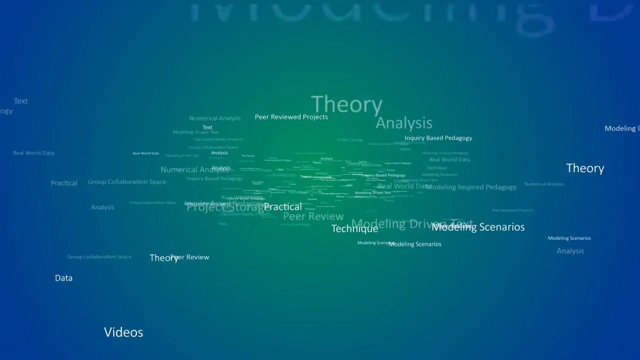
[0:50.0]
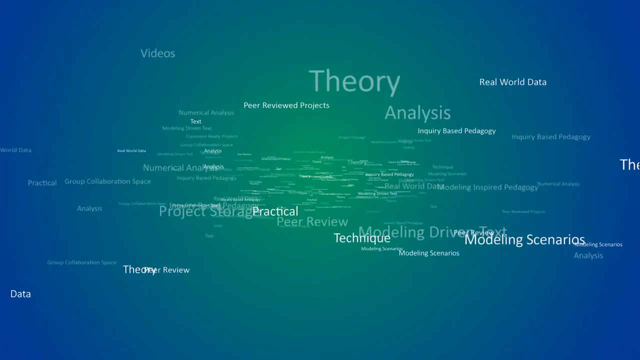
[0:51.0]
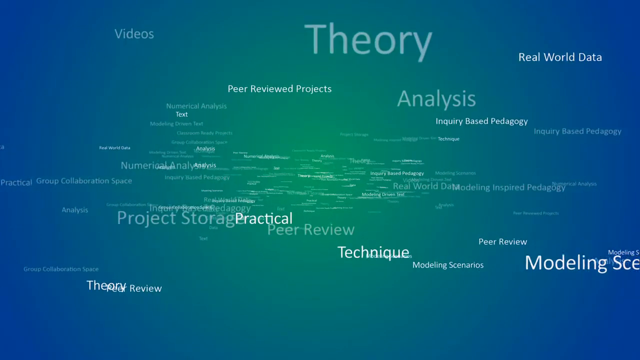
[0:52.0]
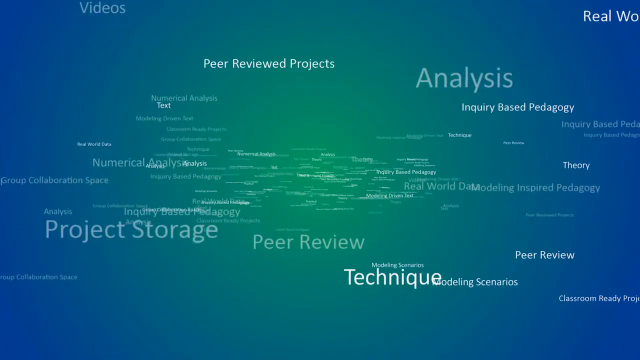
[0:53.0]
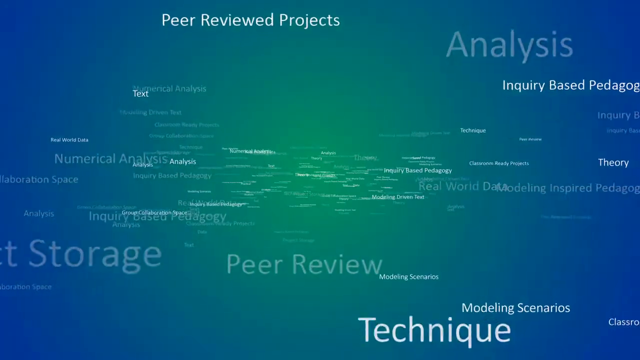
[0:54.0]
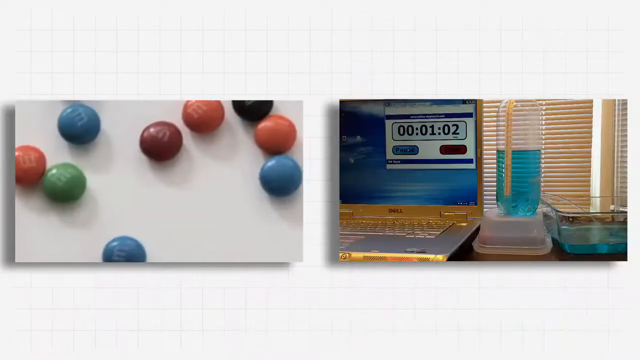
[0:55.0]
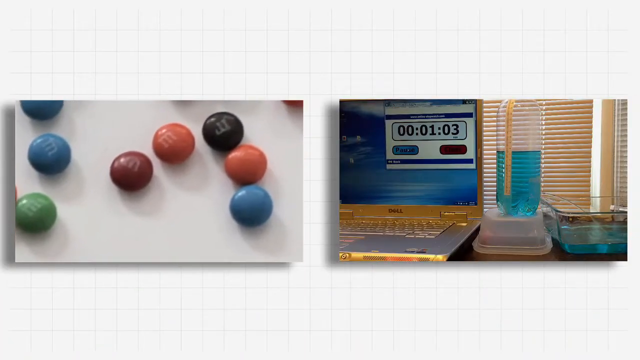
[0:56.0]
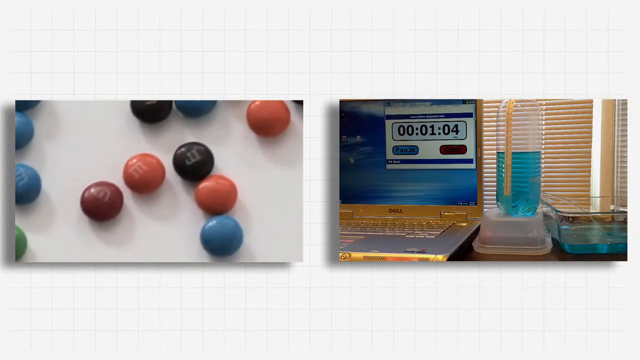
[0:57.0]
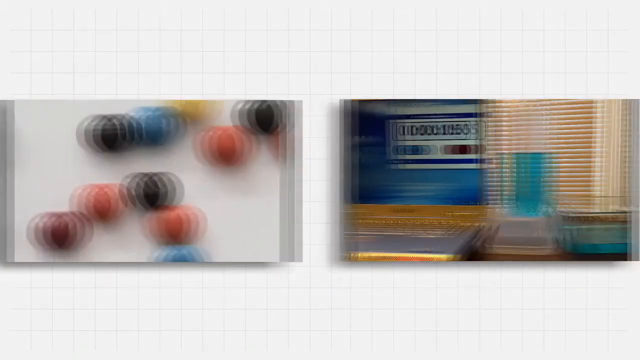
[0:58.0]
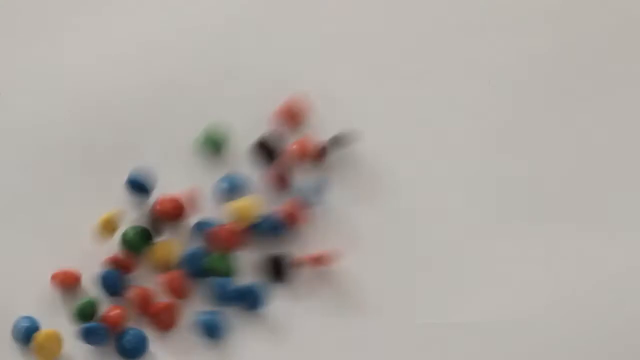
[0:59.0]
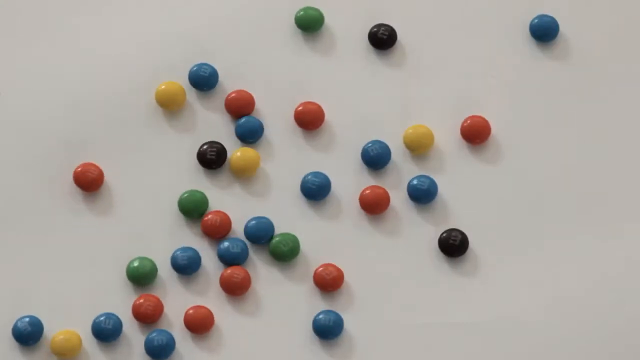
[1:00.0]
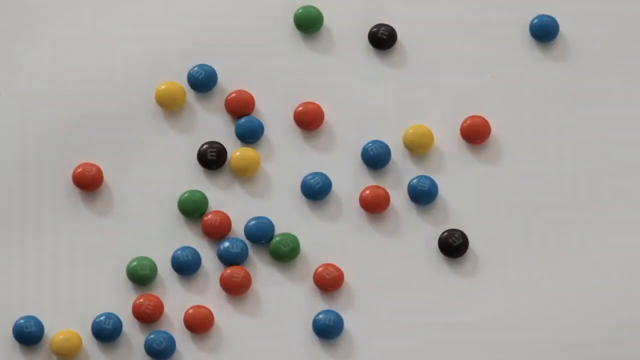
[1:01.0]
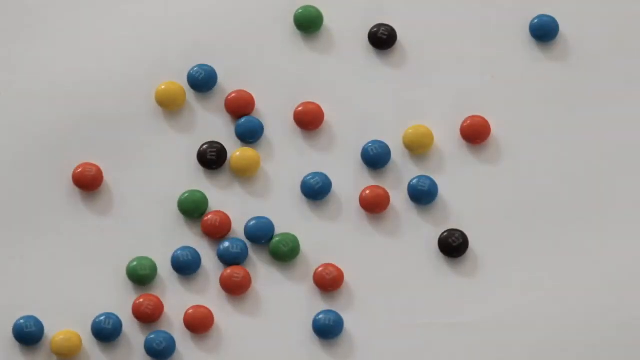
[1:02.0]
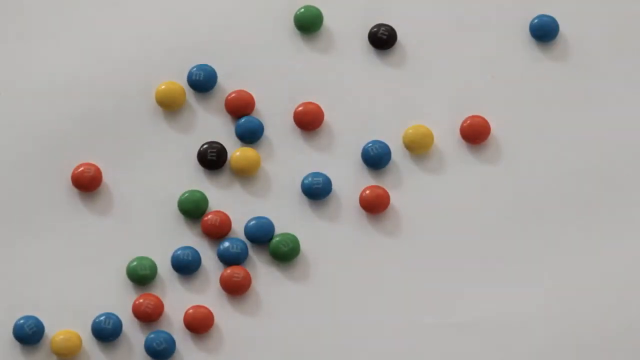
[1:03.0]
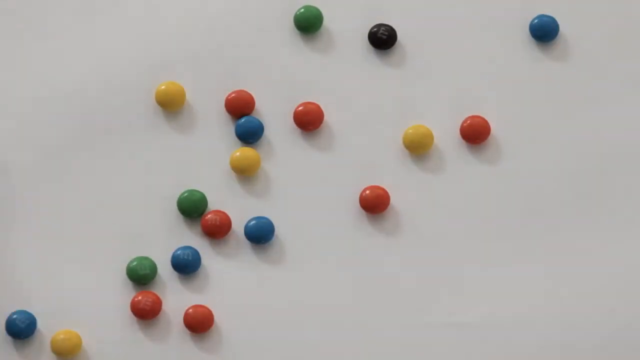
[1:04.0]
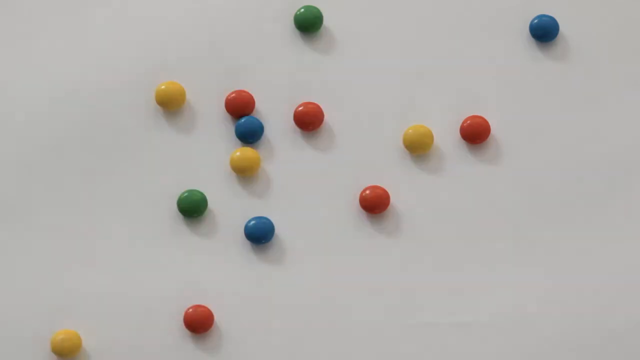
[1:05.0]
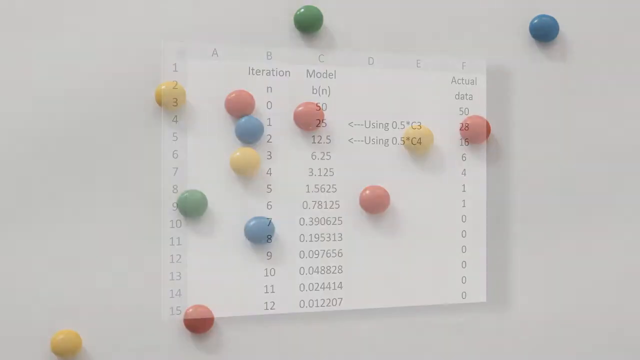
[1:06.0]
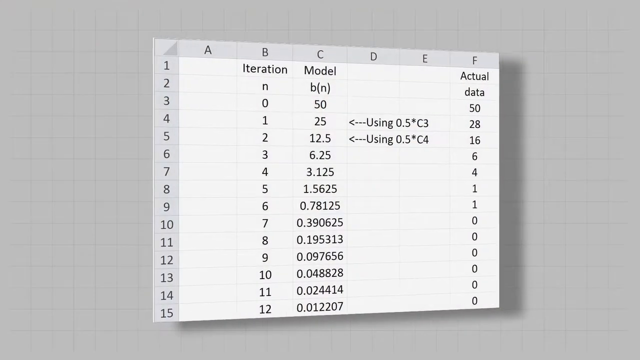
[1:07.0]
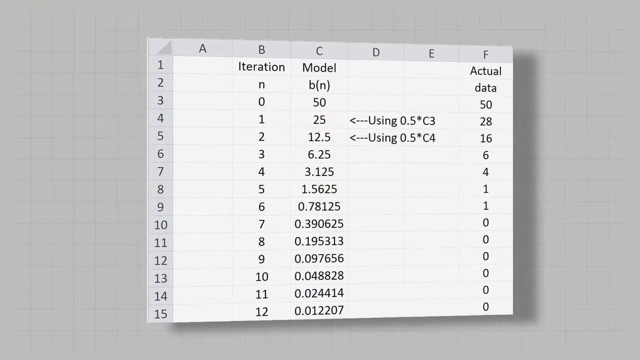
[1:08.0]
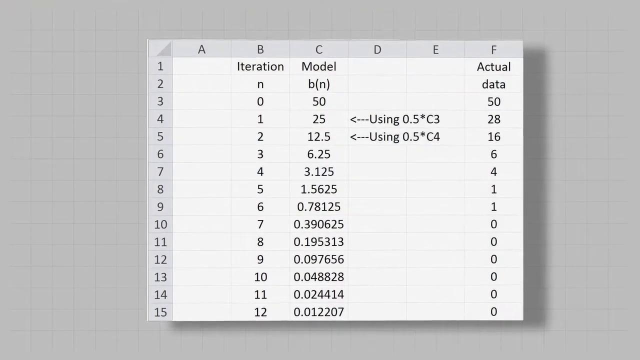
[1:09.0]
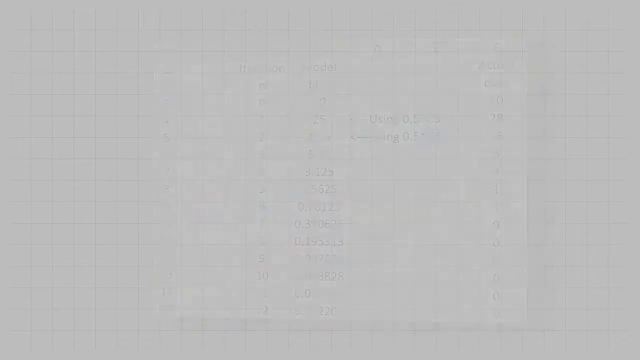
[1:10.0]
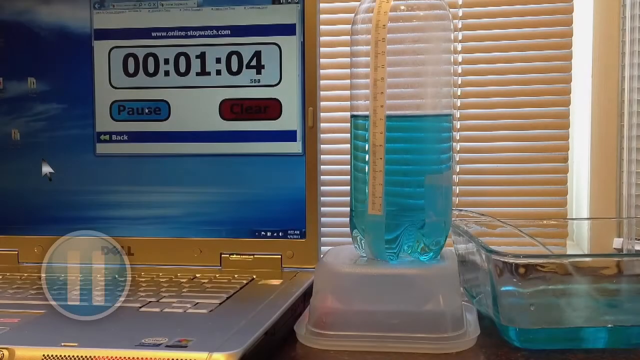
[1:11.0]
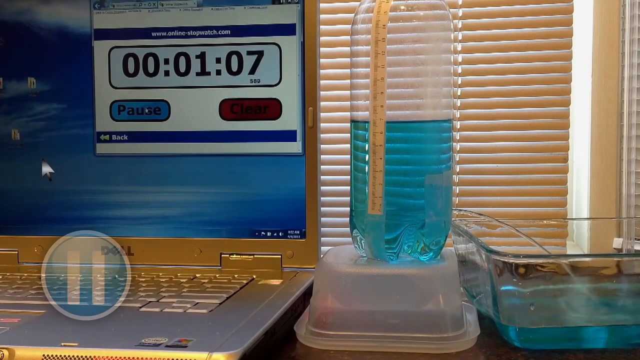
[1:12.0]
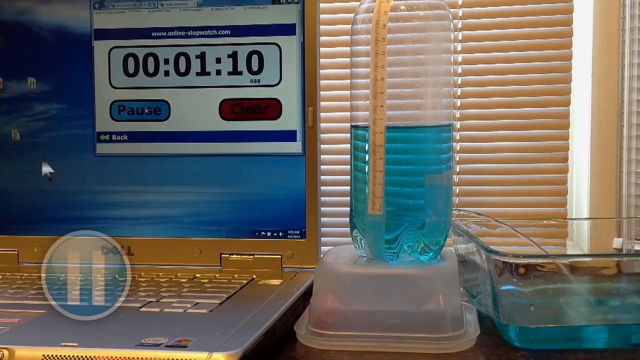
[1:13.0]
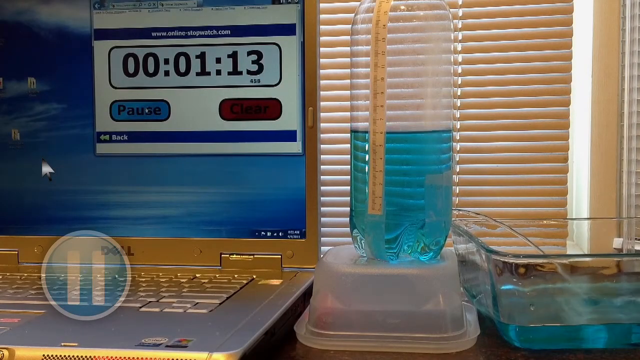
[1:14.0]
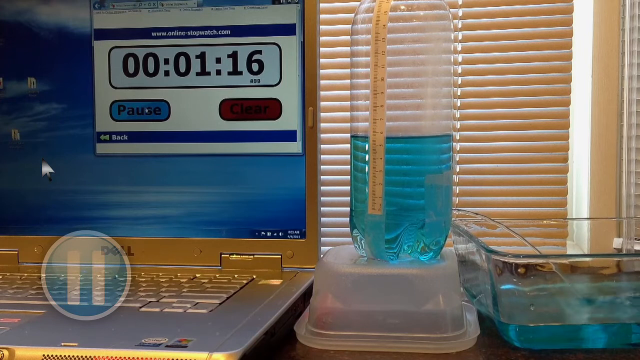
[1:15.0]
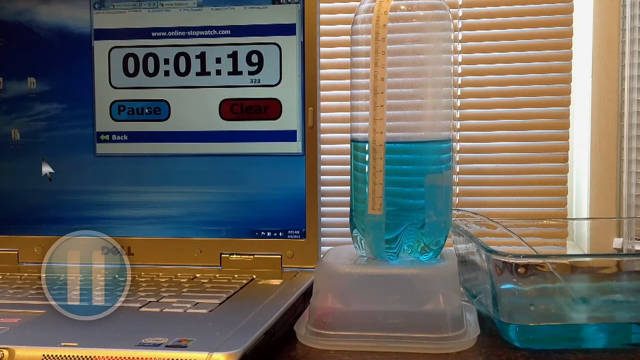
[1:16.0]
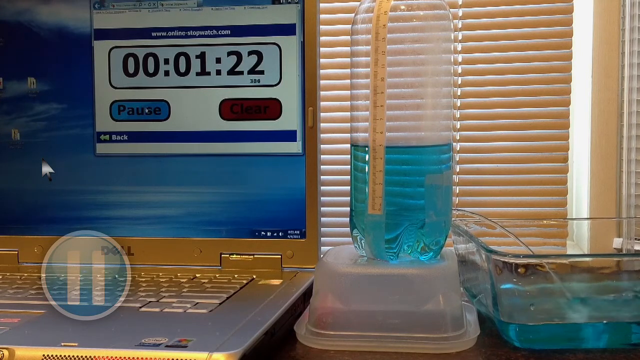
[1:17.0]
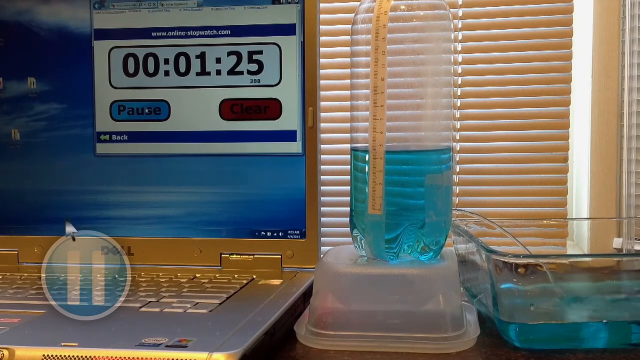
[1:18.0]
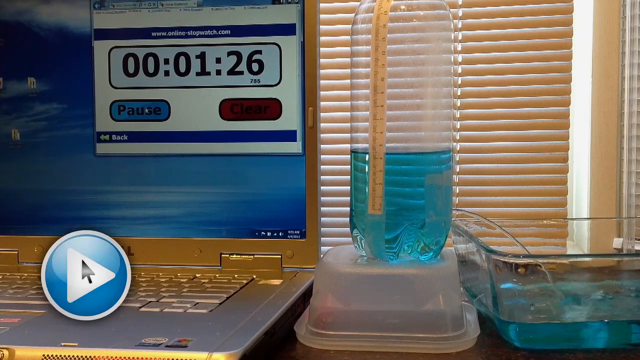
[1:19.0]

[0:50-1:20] Words emerge from the blue screen with the green center: "data" toward the bottom left, "theory" in the center halfway down the top half, "analysis" slightly below and to the right of it, "videos" toward the top left, "peer-reviewed projects" in much smaller font just below and to the left of "theory", and "modeling scenarios" toward the bottom right. The words approach the camera from the depths of the screen. They are replaced by a white background with very faint lines forming squares, with a border of these crisscrosses at the top and bottom and two images in between. The image on the left shows a number of M&Ms on a white background: a couple slightly obscured on the left side, a blue one just above center, a green one slightly below the midline, a red one just left of center, an orange one above and slightly to the right of that, a brown one slightly to the right and above that, then on a diagonal, practically touching it and forming a line pointing toward the bottom right of the image, another orange one, and touching that, pointing perhaps to inside the bottom right angle on the horizontal, a blue one. The image on the right shows a Dell keyboard along the bottom and a computer screen with its lid up, displaying a graphic apparently showing a time, "00:01:03", above the Dell name. To the right of the computer, forming about half of the image, a bottle in the center holds light blue liquid filling it to maybe just over half, with some sort of straw inside it disappearing into the top of the frame. Below the bottle is what might be an overturned container, and to the right is another nearly empty container, possibly with some water in the bottom. Behind the bottle, peeking out on its left, more so on its right, and visible through it, is a window with closed venetian blinds.